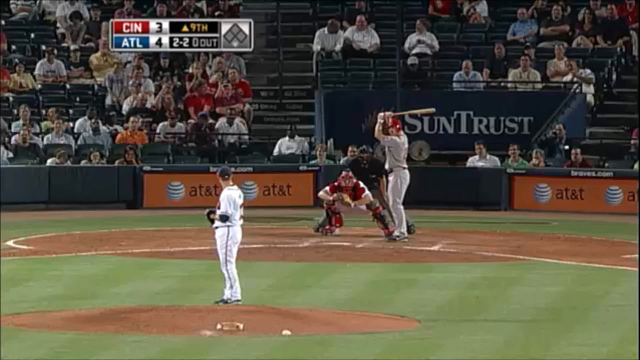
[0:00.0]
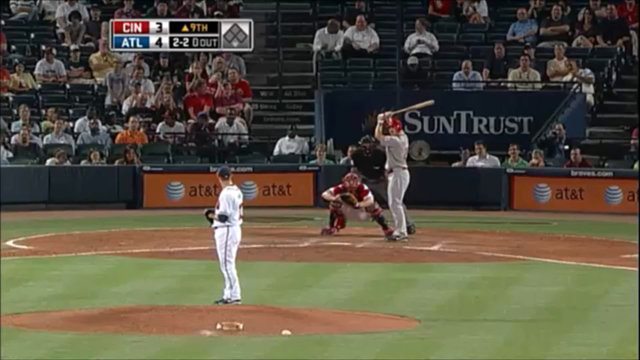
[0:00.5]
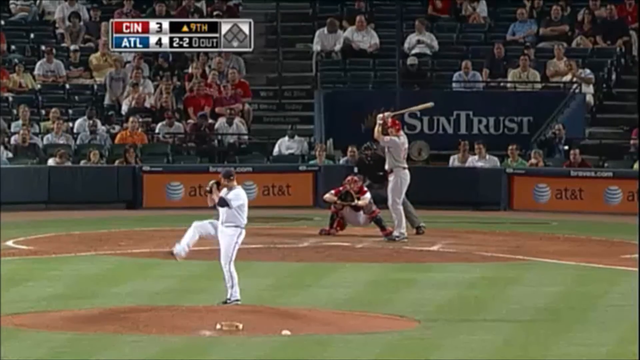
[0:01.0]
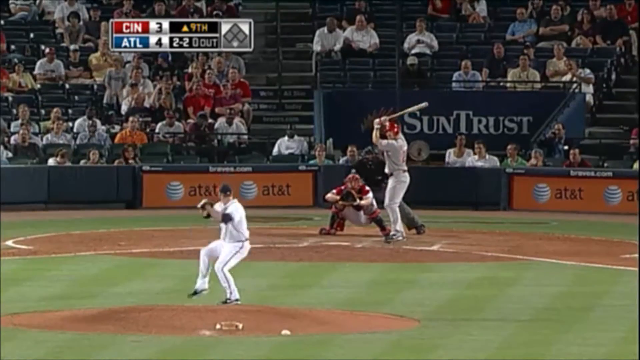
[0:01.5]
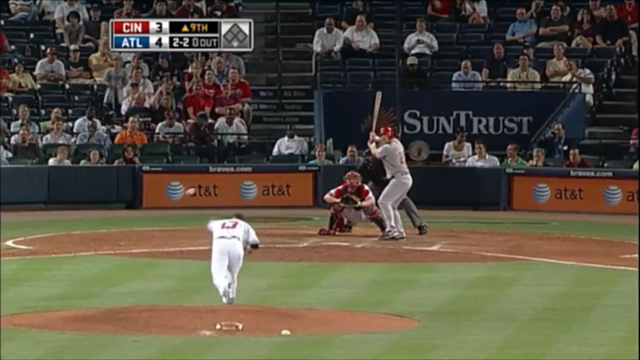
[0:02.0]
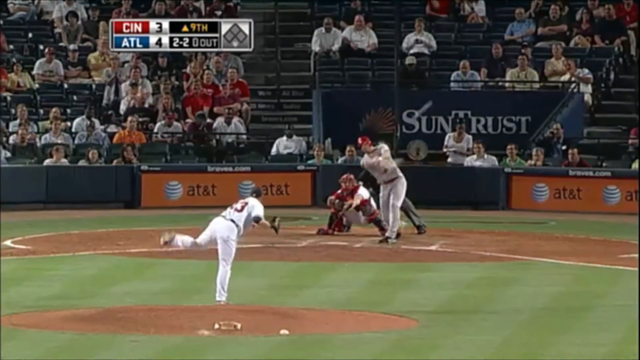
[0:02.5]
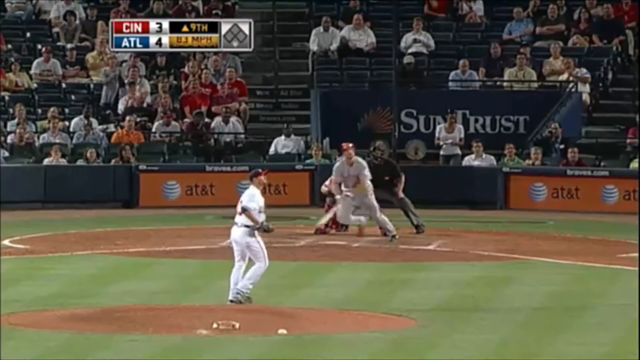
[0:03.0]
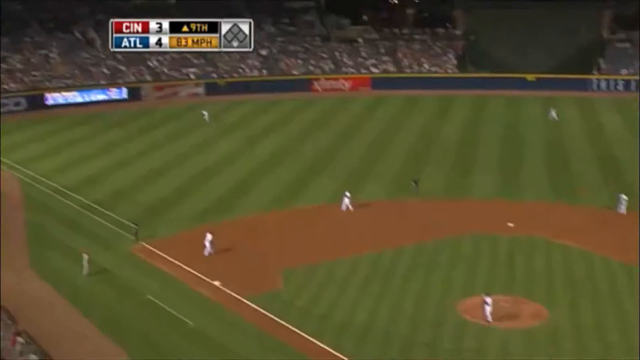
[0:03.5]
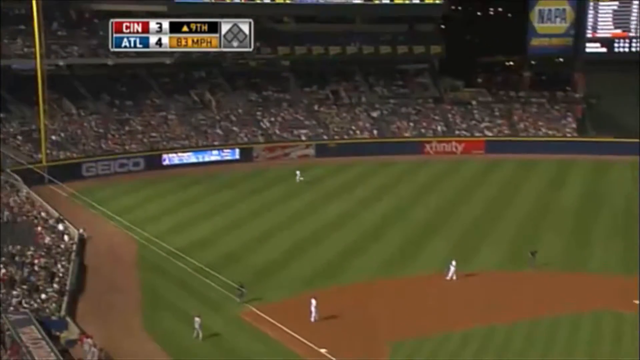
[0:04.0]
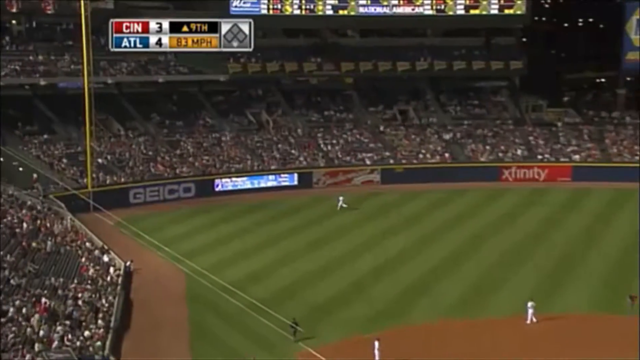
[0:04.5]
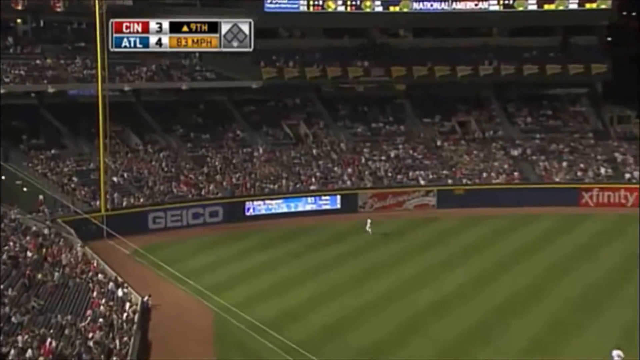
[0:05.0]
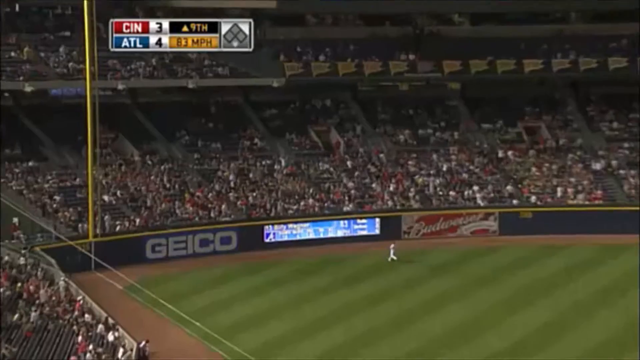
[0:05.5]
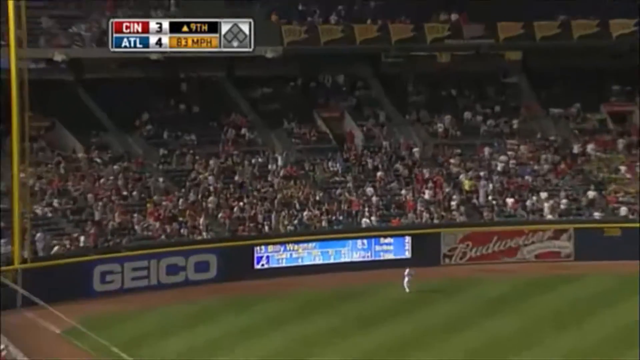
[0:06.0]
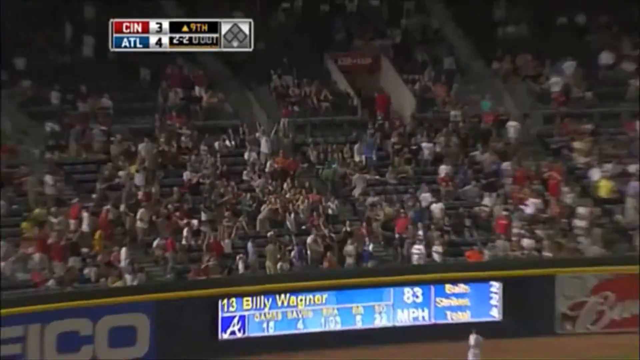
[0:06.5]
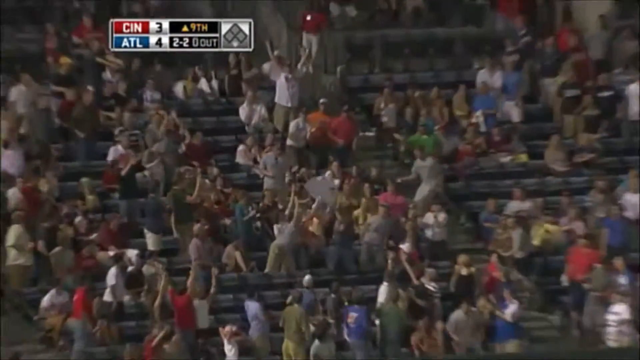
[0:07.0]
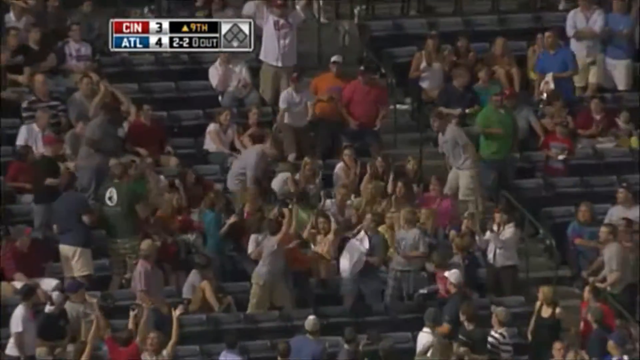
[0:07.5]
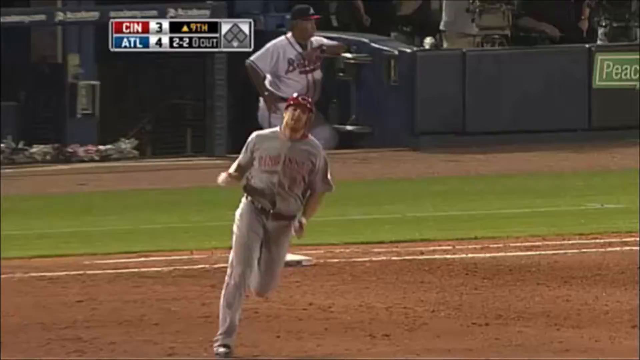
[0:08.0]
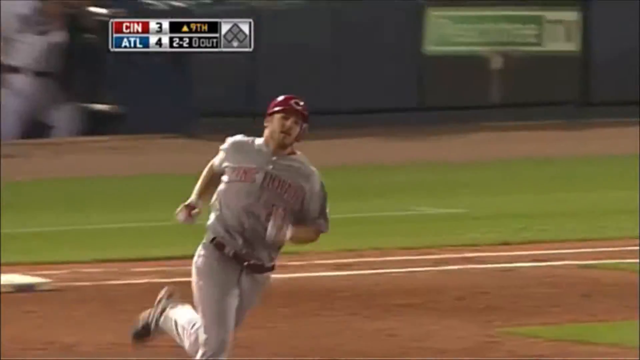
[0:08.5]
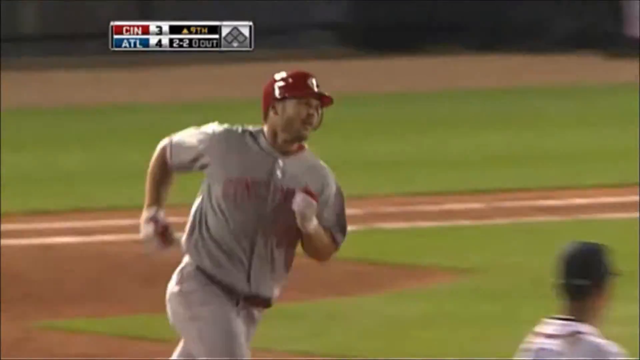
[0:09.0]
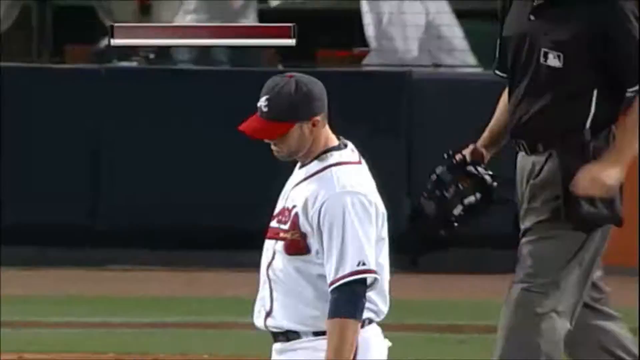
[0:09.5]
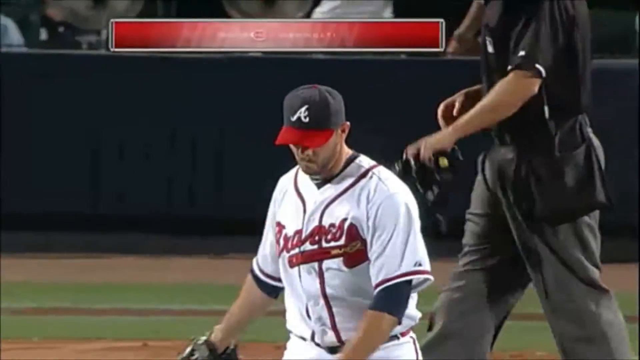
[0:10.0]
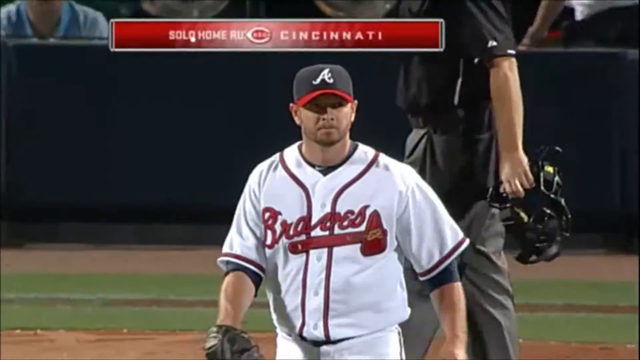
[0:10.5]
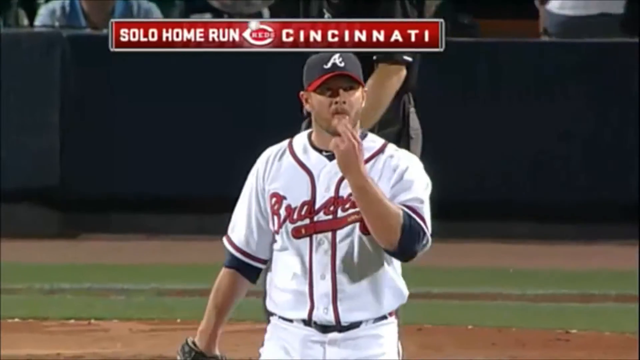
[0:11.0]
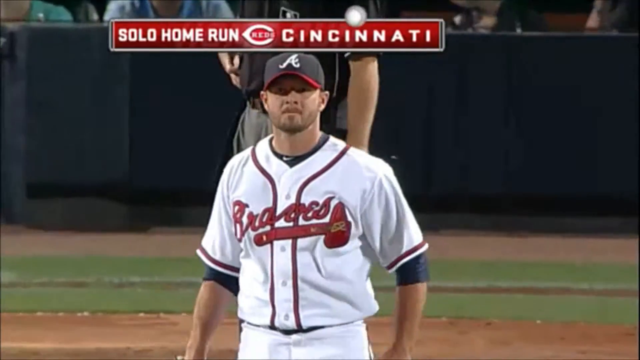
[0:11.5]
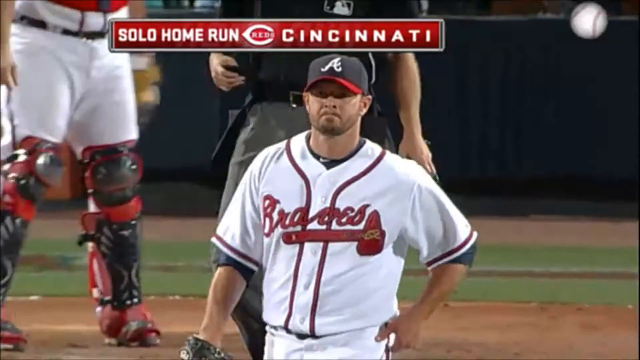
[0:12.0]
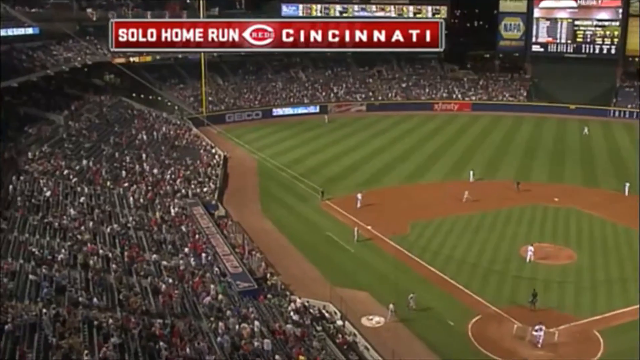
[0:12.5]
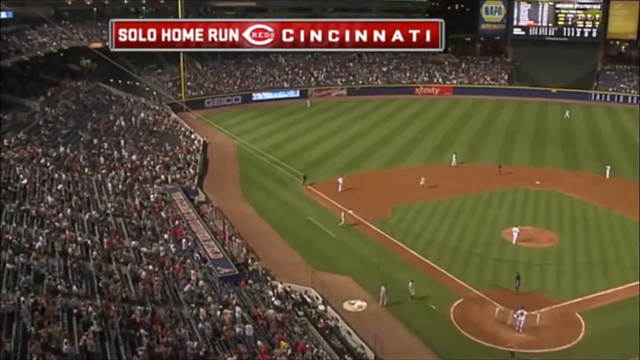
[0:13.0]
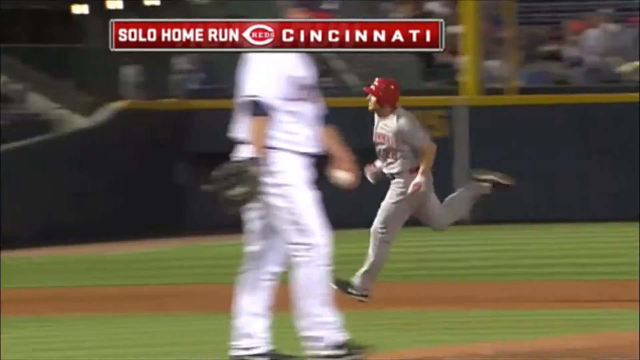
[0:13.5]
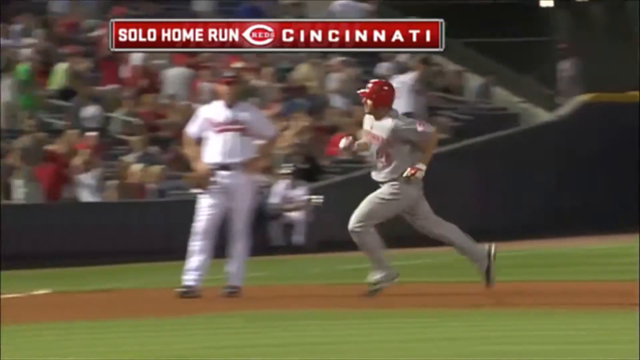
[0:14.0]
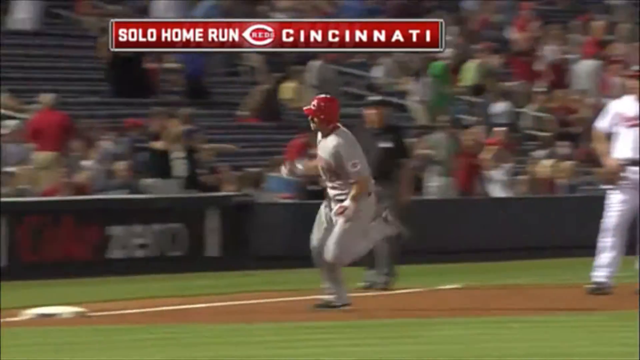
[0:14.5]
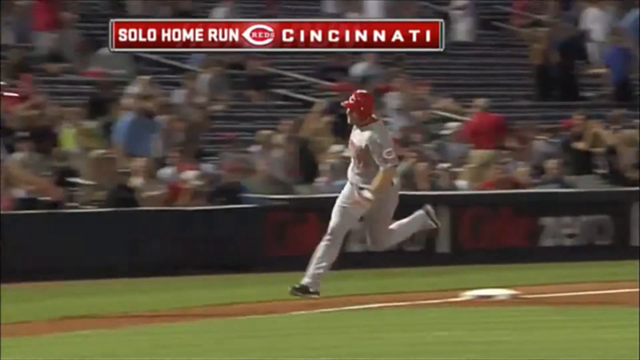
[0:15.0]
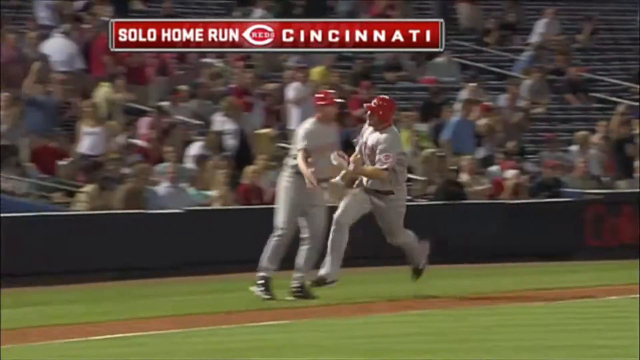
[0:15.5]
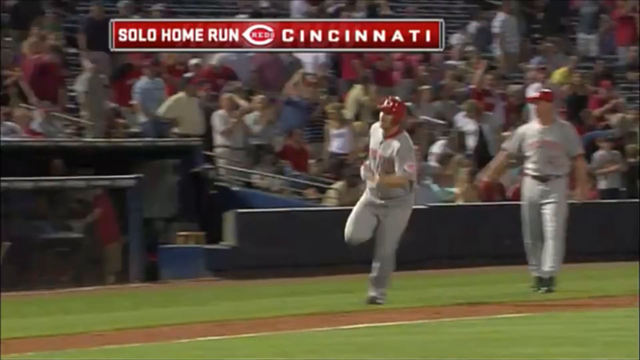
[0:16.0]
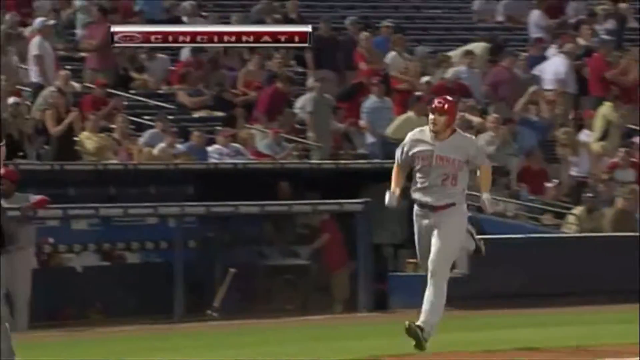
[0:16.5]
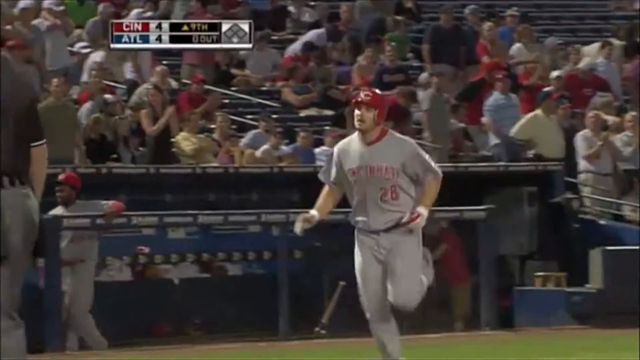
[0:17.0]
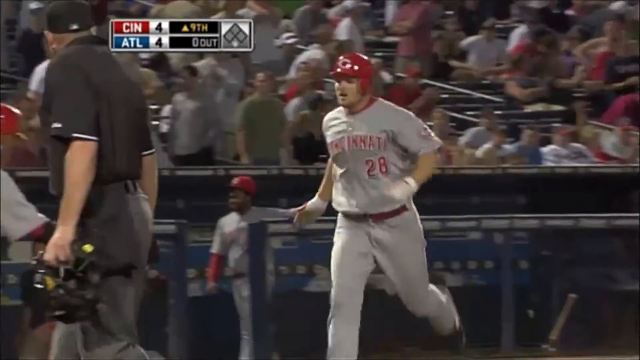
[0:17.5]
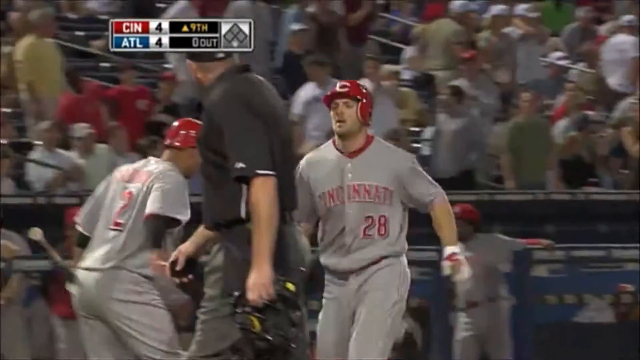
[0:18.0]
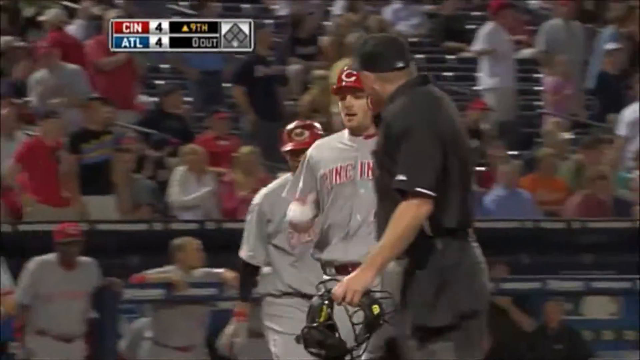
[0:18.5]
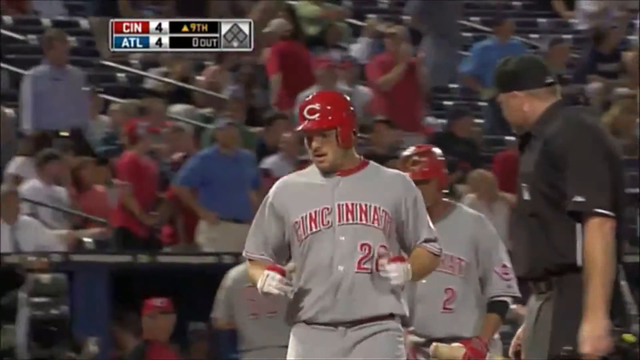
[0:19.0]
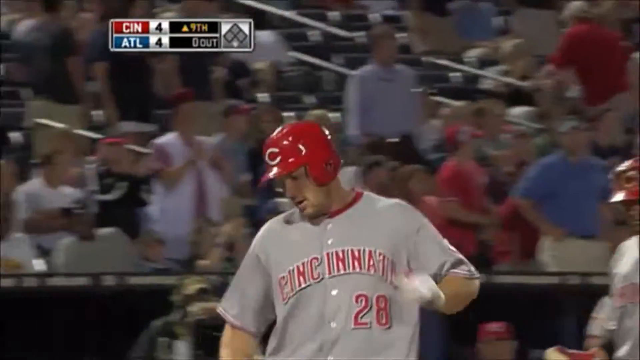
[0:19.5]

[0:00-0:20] The video shows a baseball game between Cincinnati and Atlanta. The pitcher winds up and throws the ball with his left hand, and the batter hits it far to his left, throws the bat on the floor and runs to first base. It is a home run for Cincinnati: the ball goes all the way into the crowd, where someone catches it. The batter runs all the way around the bases and makes it home. The score reads Cincinnati 4, Atlanta 4, apparently in the ninth inning. "SunTrust" appears in the background behind the batter, and "AT&T" appears on the sides. There is a medium-sized crowd behind the batter, and a decent-sized number of people where the home run landed. A Braves player does not look too happy; he kind of licks his hand and walks off. As the Cincinnati player makes it home, he high-fives one of his teammates.